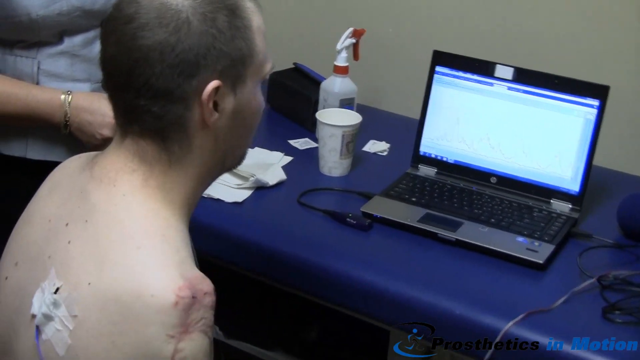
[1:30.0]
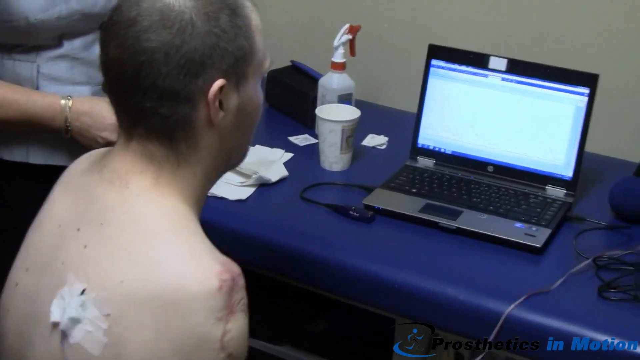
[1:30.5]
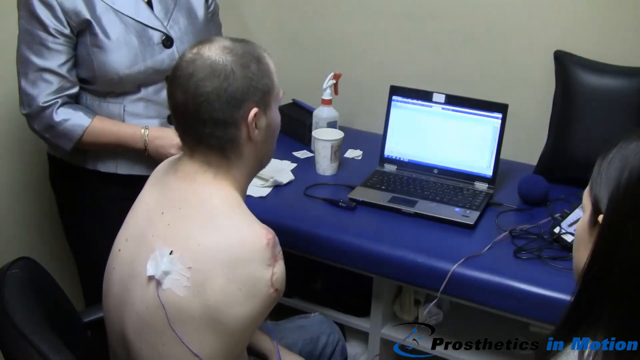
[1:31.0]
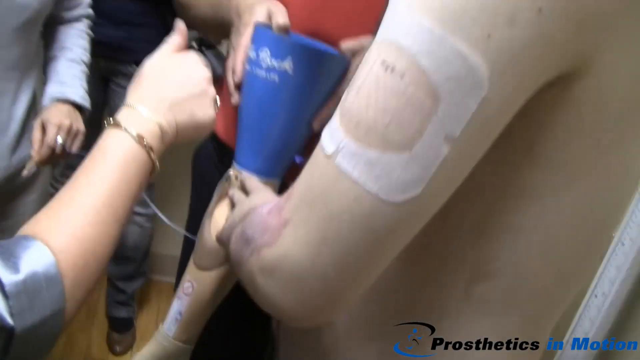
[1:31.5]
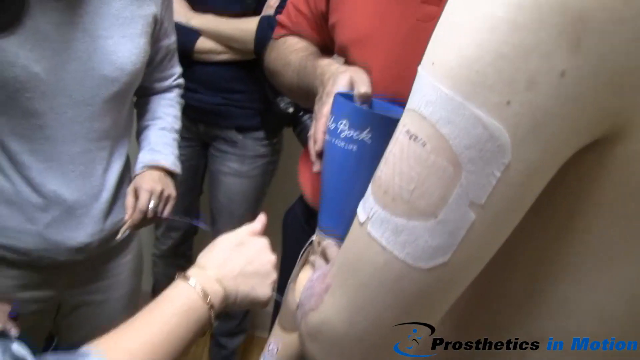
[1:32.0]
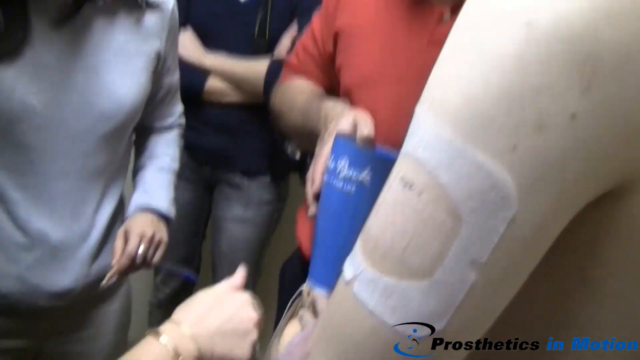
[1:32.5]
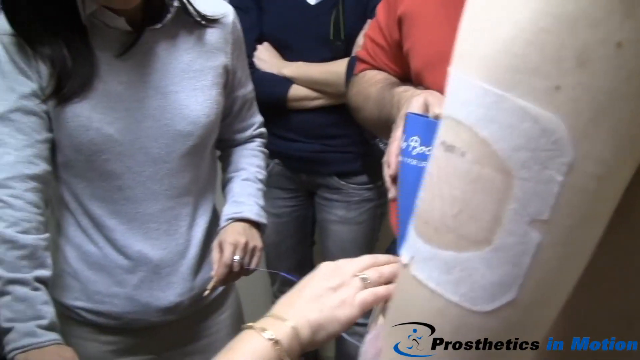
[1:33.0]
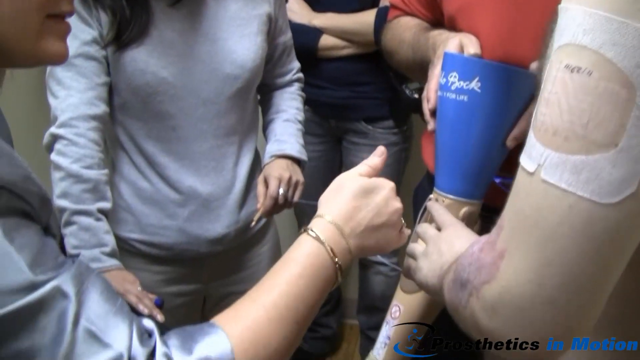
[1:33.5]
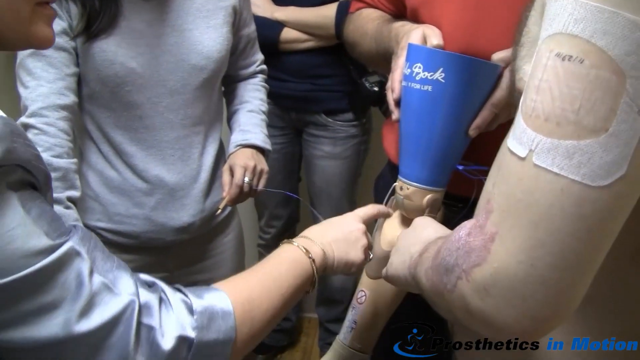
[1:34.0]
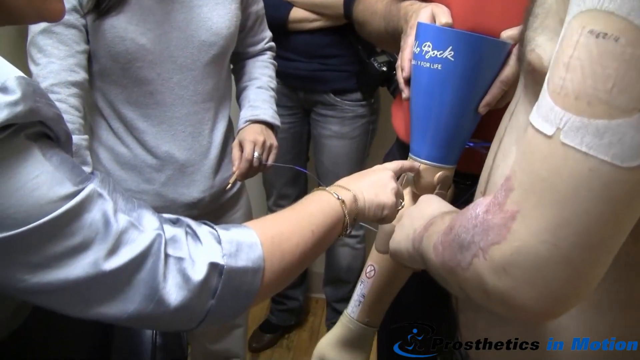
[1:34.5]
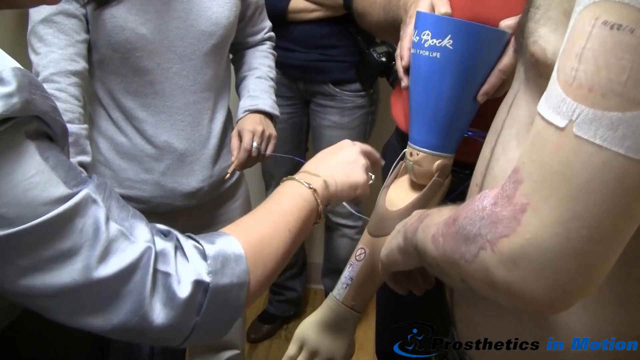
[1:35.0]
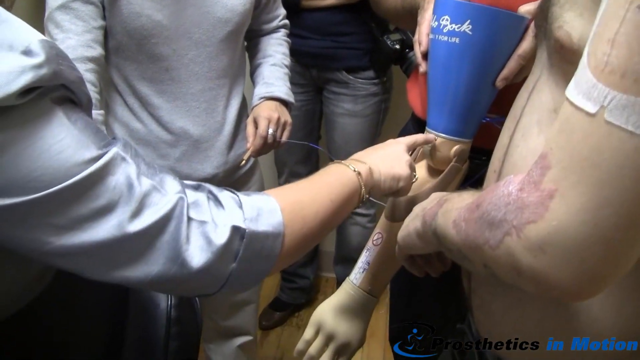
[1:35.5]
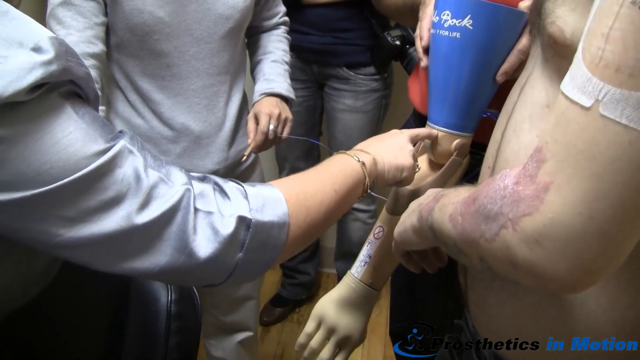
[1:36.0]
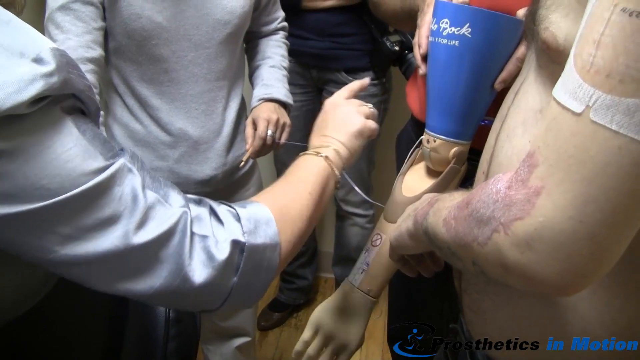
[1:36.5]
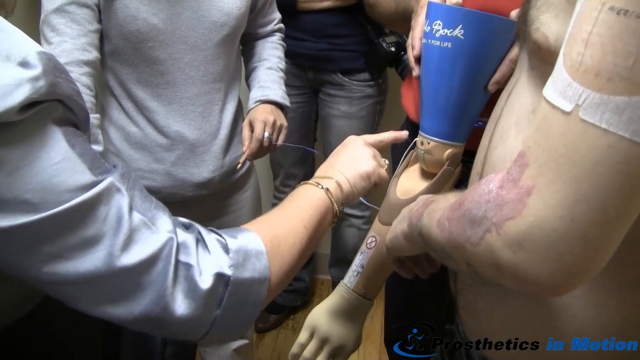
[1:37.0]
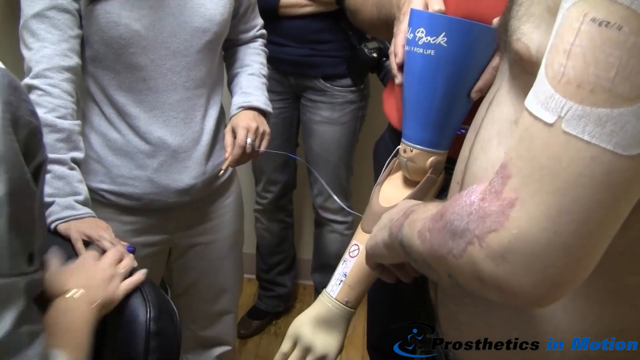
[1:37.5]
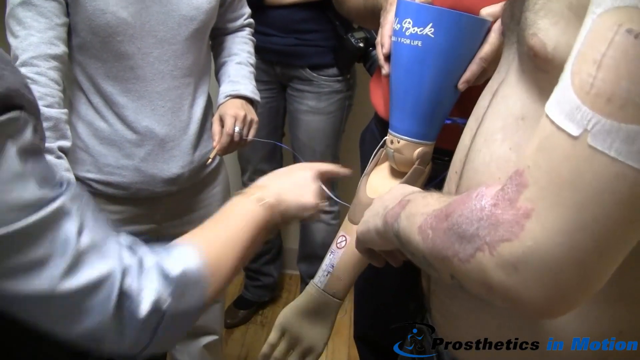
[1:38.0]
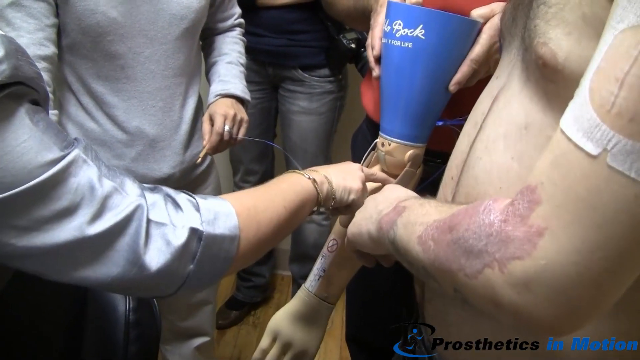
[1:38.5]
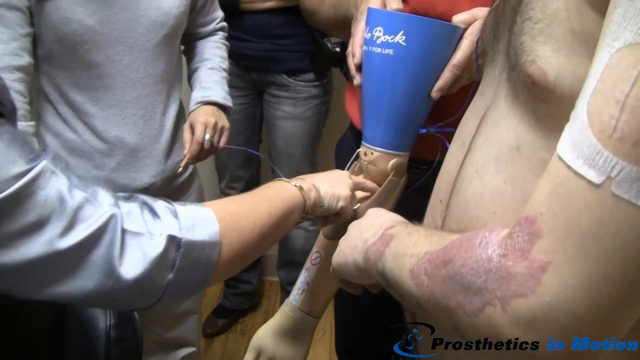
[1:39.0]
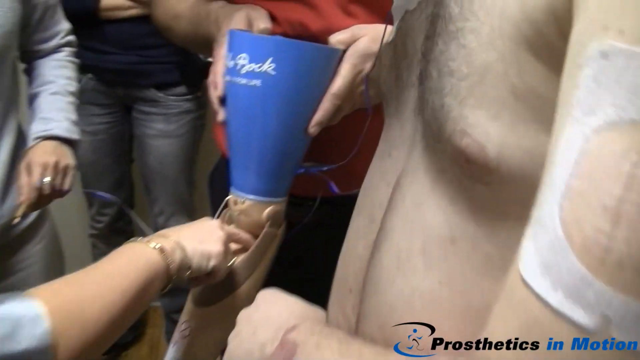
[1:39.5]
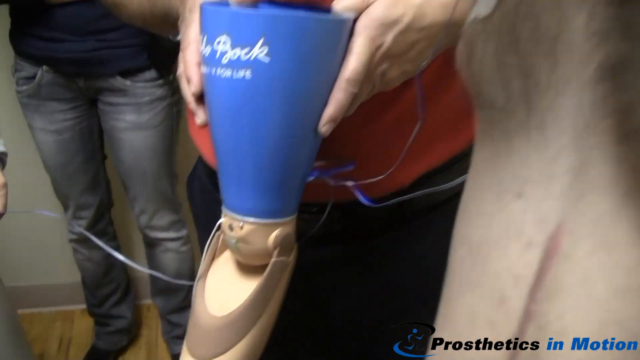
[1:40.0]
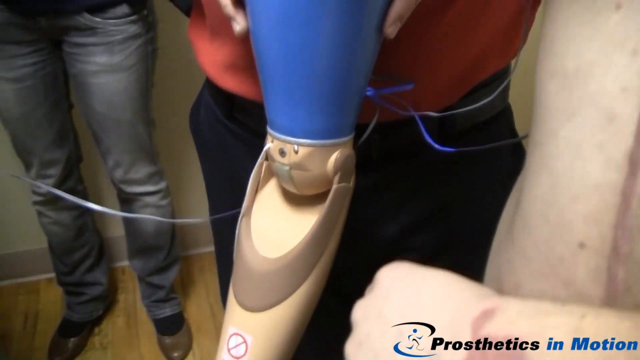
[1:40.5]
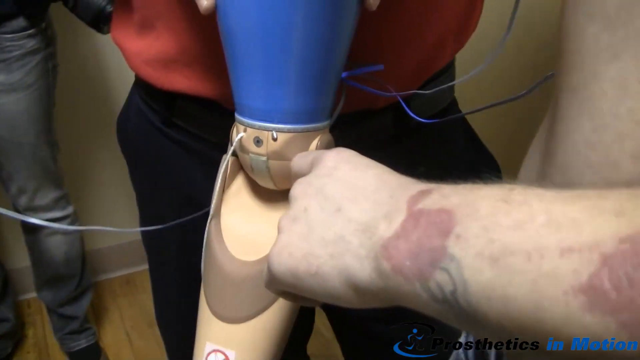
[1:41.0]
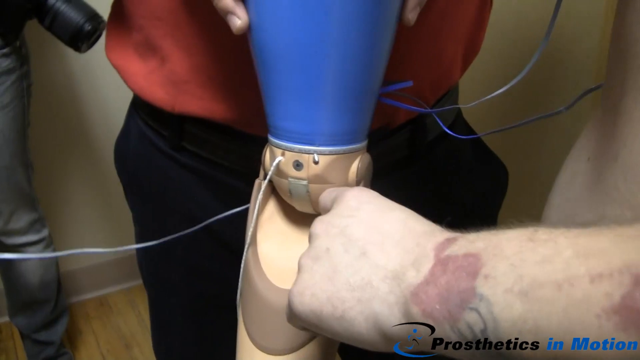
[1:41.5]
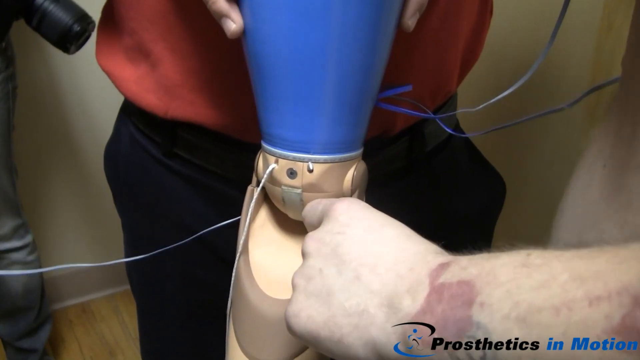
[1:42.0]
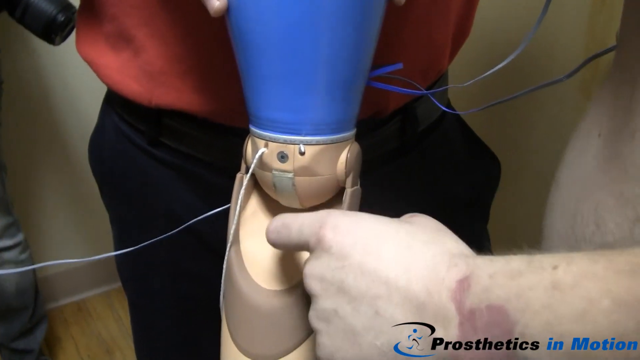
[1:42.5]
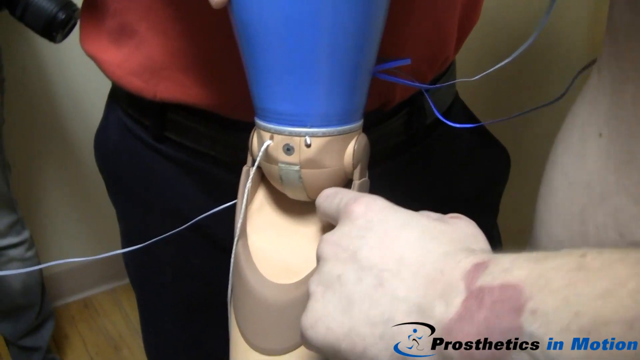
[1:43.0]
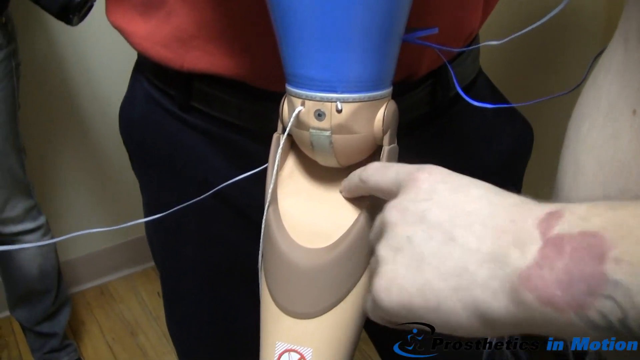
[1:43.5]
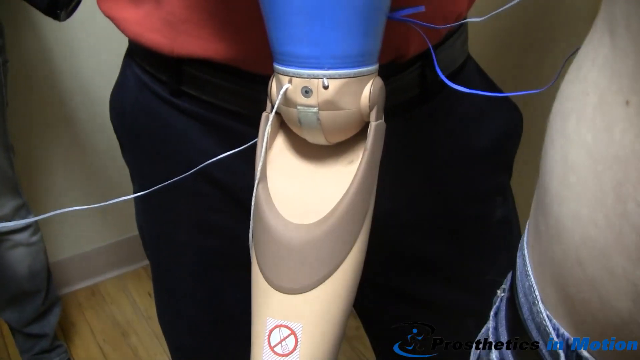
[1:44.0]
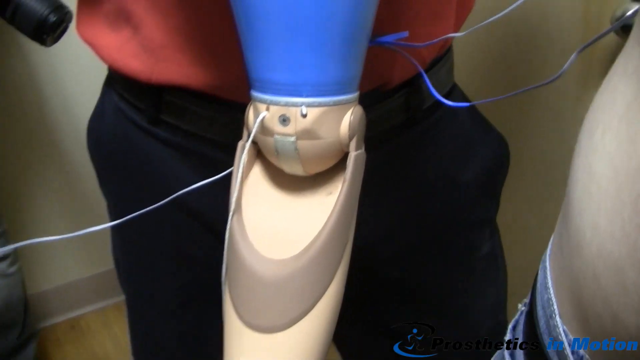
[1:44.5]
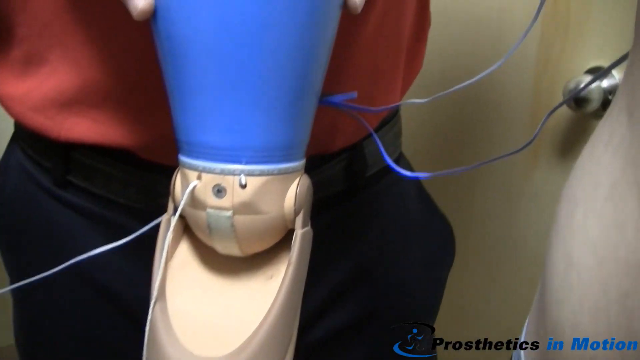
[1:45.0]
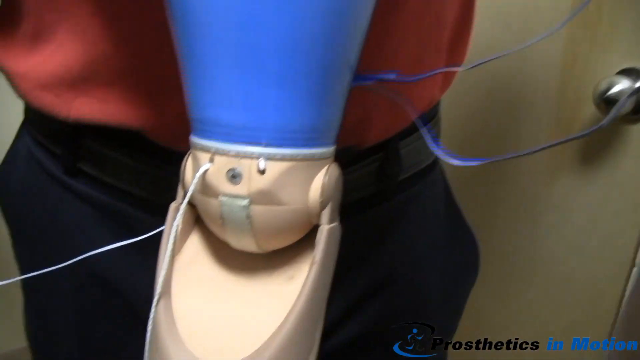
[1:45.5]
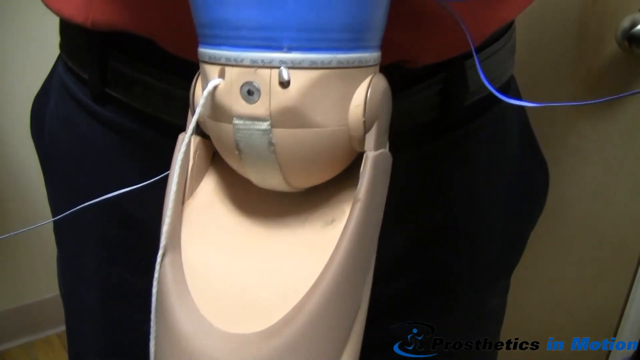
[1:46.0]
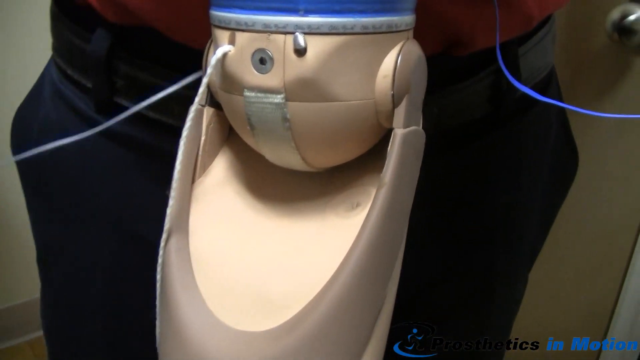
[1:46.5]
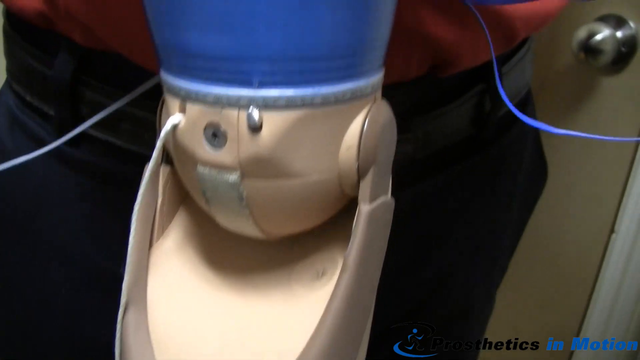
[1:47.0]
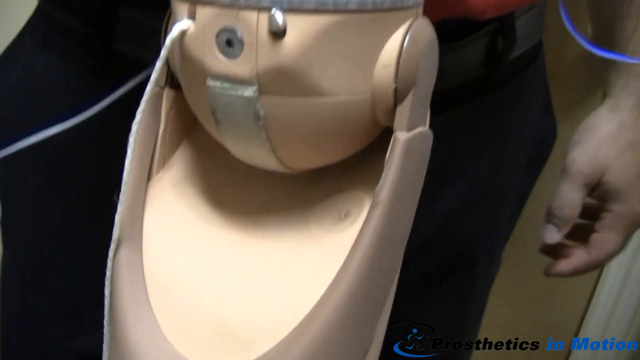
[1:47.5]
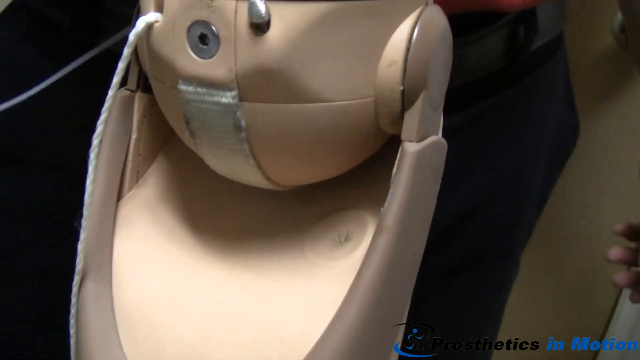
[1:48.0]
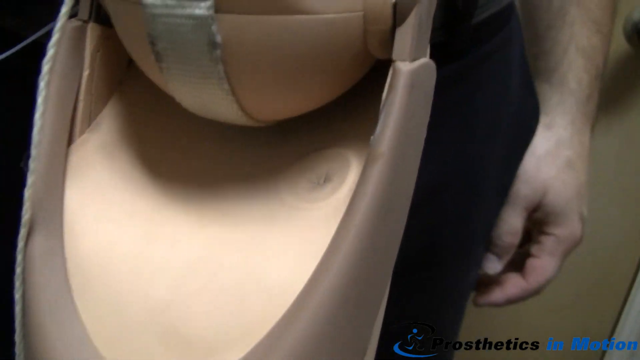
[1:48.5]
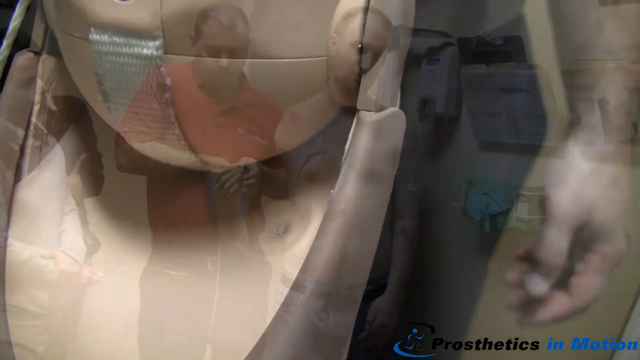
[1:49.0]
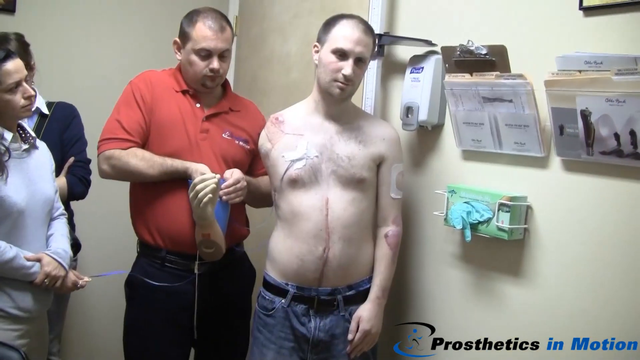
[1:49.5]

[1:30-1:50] In the doctor's office there is a laptop on a desk or couch. A man is sat with his shirt off, with an amputation at his right shoulder. An electrode is taped to the tip of his right shoulder blade, with the electrode tip exposed. The man watches the laptop, while a doctor in a silver jacket is stood to his left. The man flexes his shoulder blades. The scene then changes to a prosthetic arm held by the man in a red t-shirt and touched by the man with the amputation, who has a plaster on his left arm. The woman in the silver jacket points her thumb towards the prosthetic, then points her finger to the joint. She touches it and the arm moves upwards; there is a button there that she is pressing. She points her finger to the gap in the joint, and the patient examines the gap and the joint with his finger as the camera does a close-up of the joint. The scene then changes to the patient stood by the wall in the office, with the man in the red t-shirt holding the prosthetic arm in his hand.